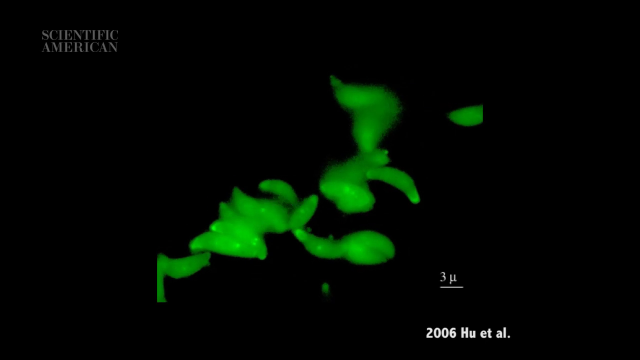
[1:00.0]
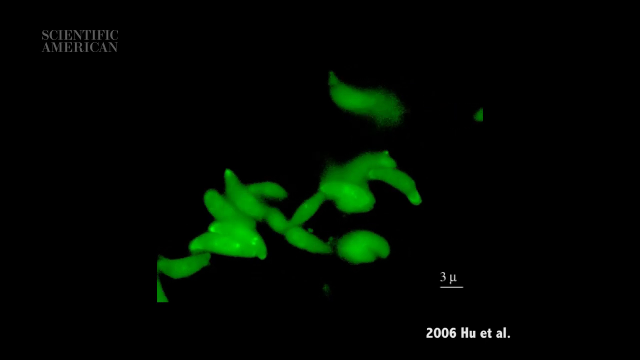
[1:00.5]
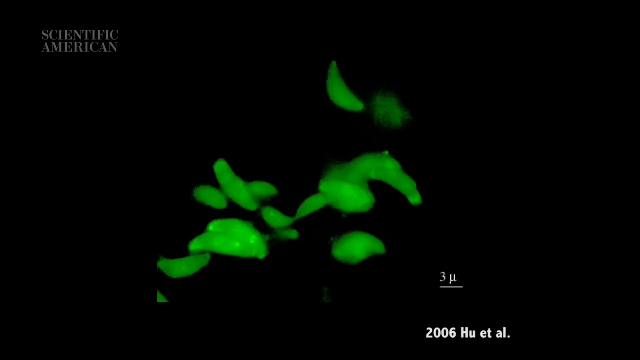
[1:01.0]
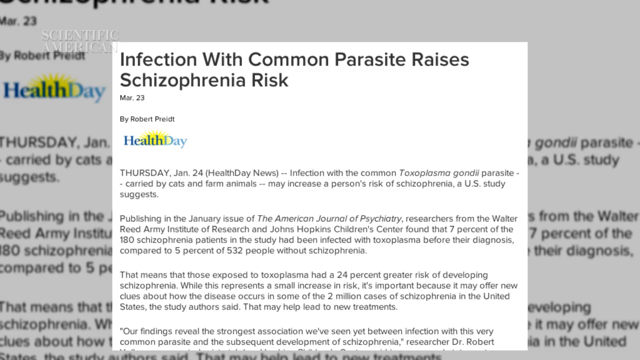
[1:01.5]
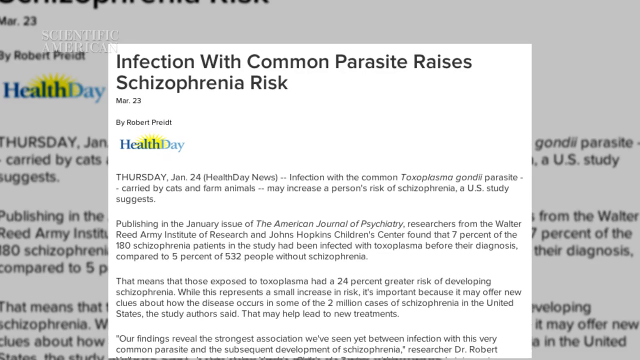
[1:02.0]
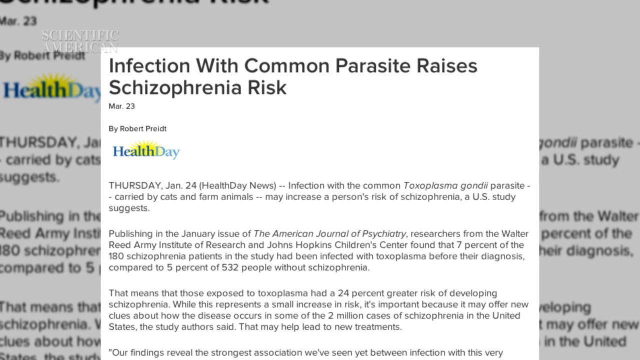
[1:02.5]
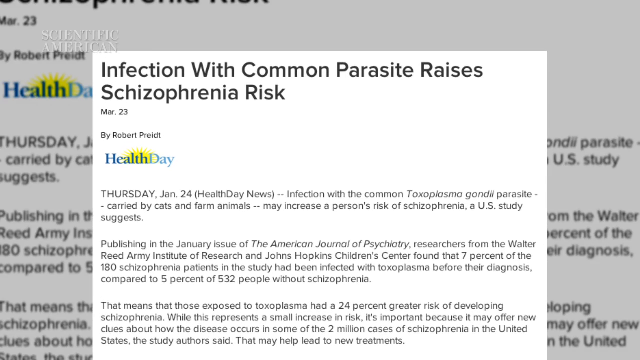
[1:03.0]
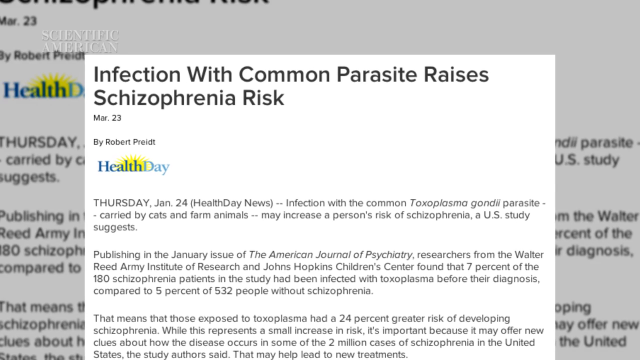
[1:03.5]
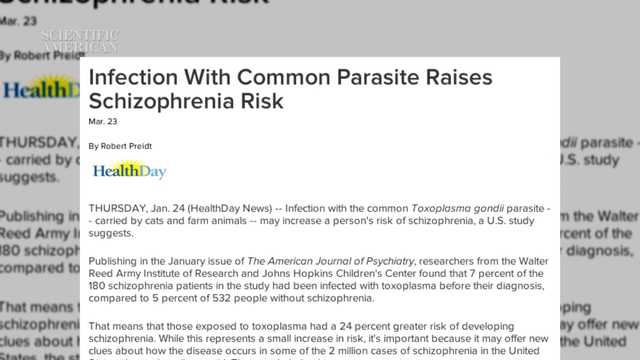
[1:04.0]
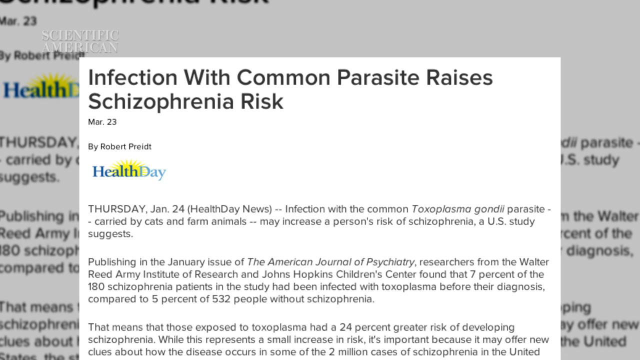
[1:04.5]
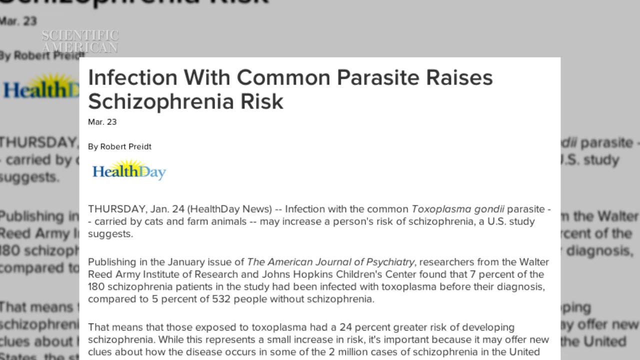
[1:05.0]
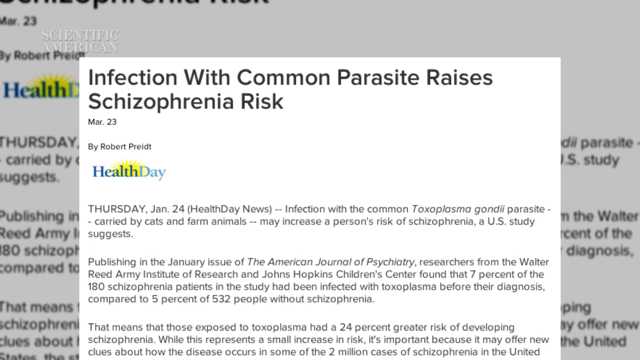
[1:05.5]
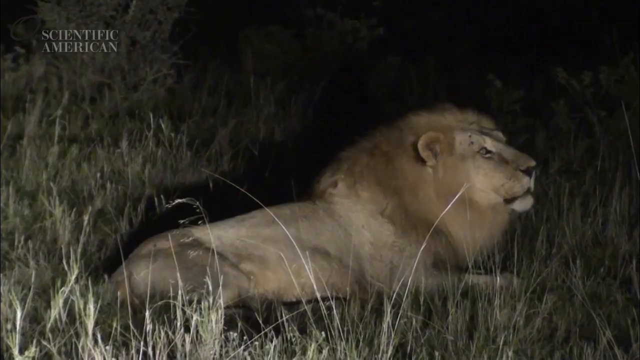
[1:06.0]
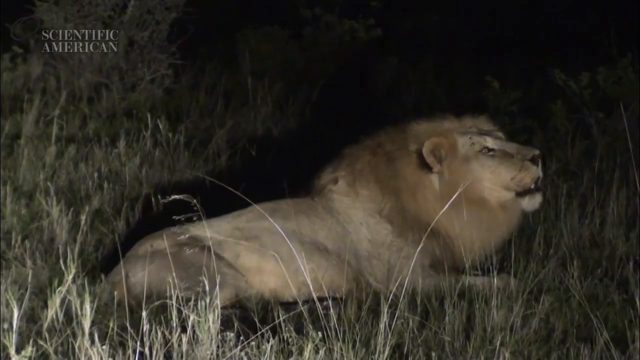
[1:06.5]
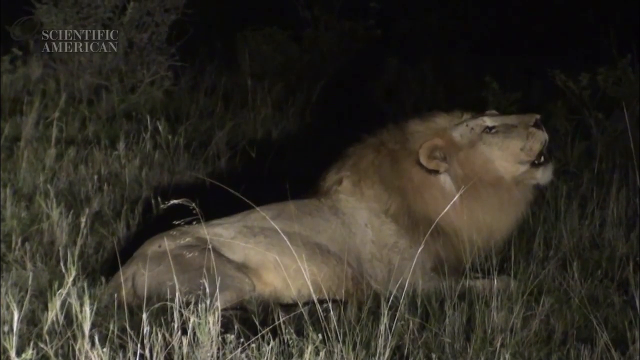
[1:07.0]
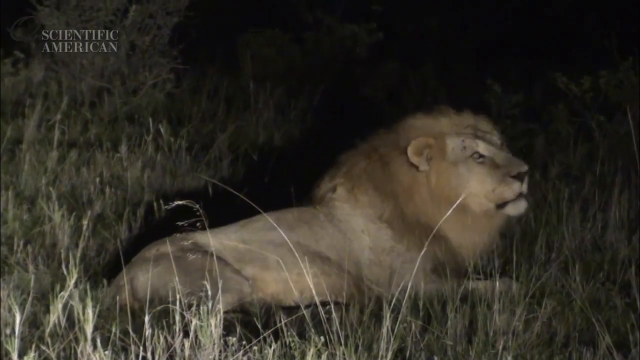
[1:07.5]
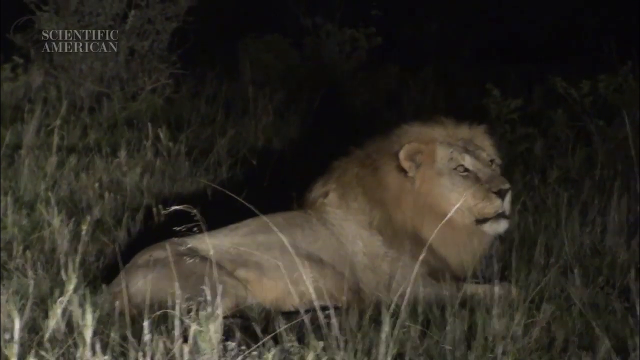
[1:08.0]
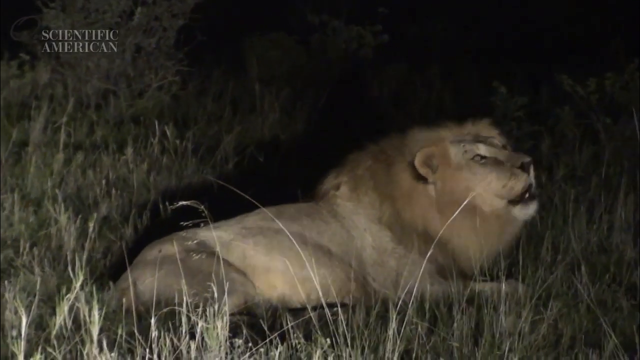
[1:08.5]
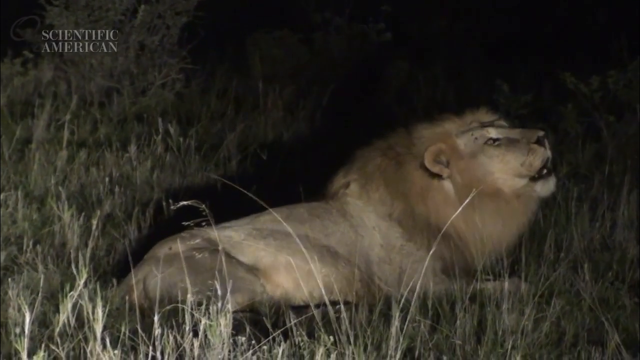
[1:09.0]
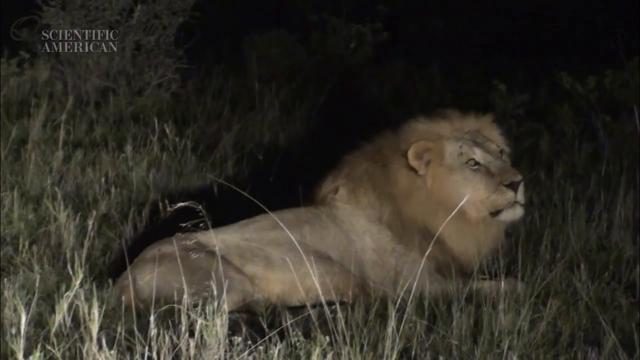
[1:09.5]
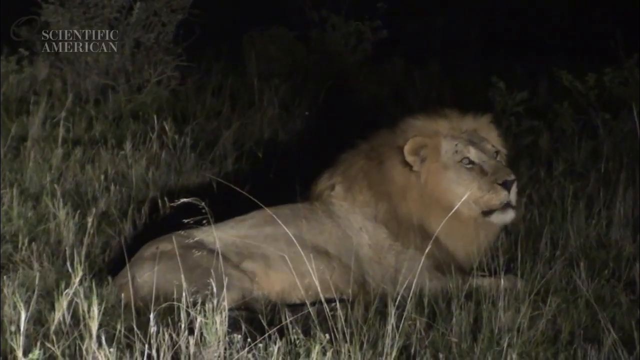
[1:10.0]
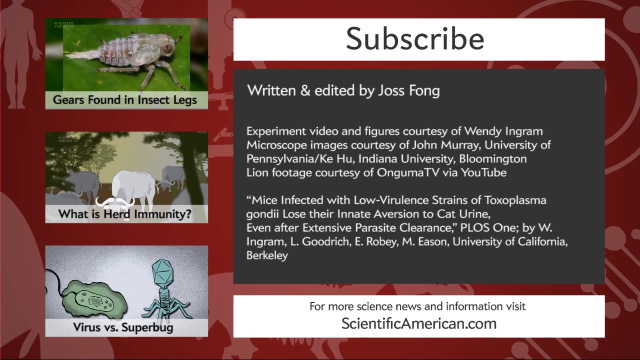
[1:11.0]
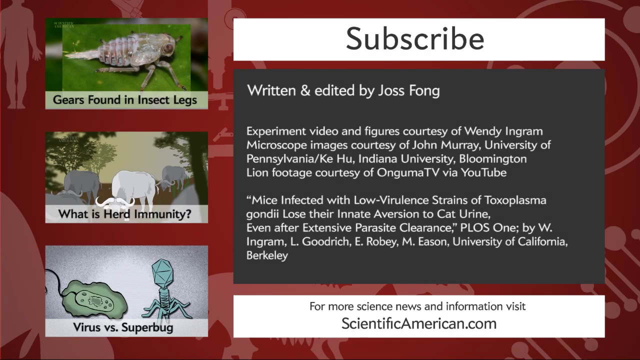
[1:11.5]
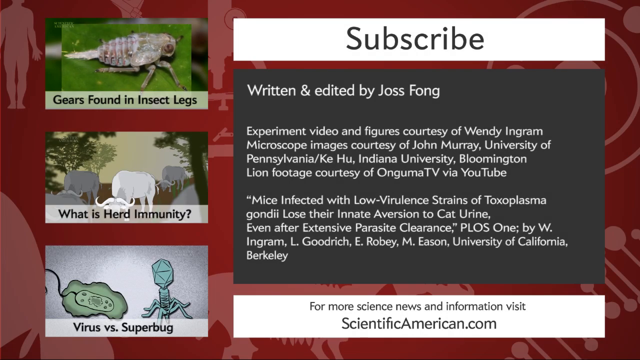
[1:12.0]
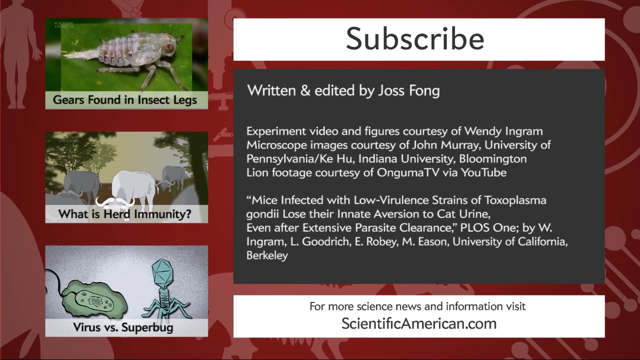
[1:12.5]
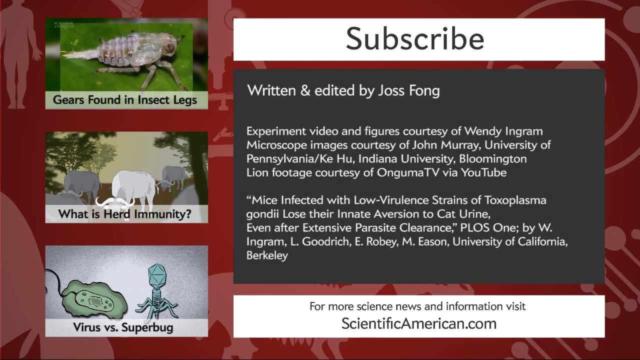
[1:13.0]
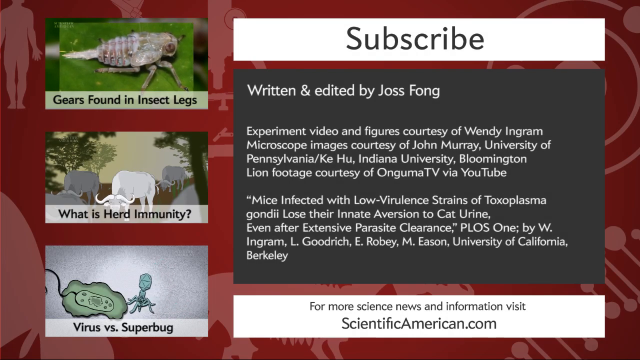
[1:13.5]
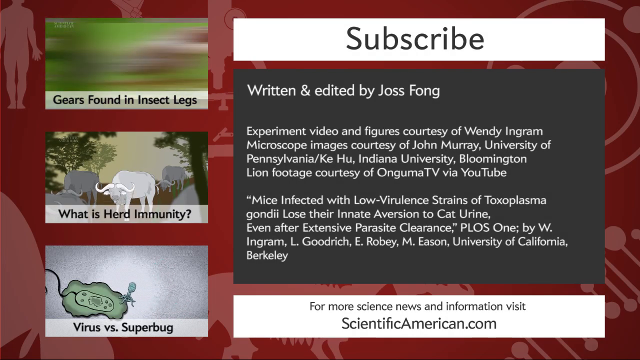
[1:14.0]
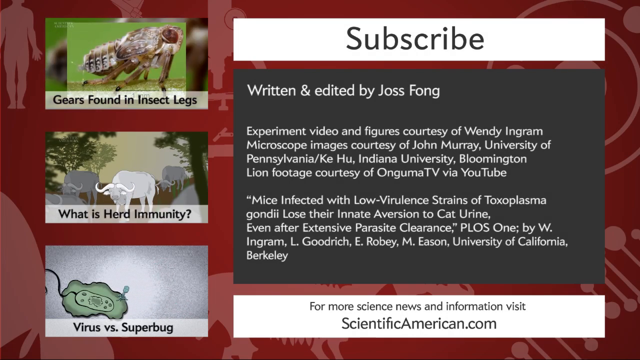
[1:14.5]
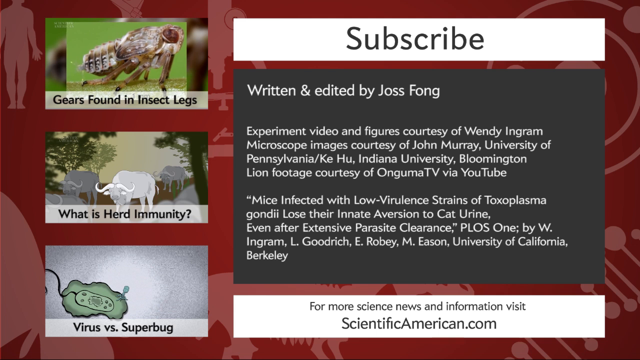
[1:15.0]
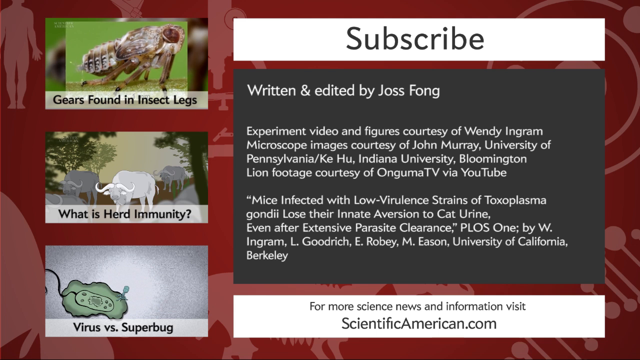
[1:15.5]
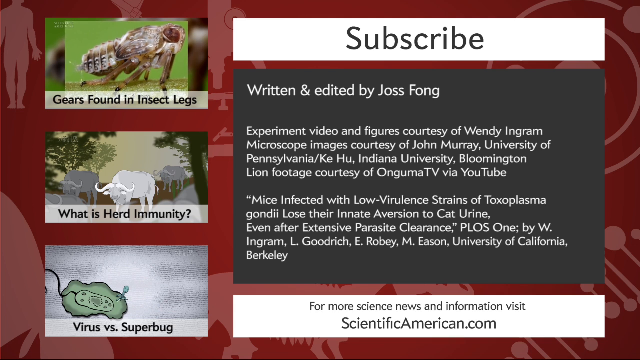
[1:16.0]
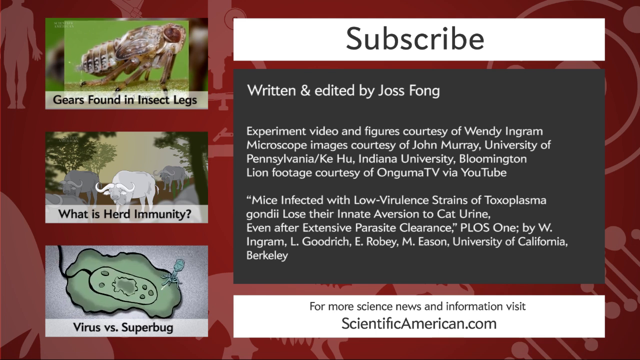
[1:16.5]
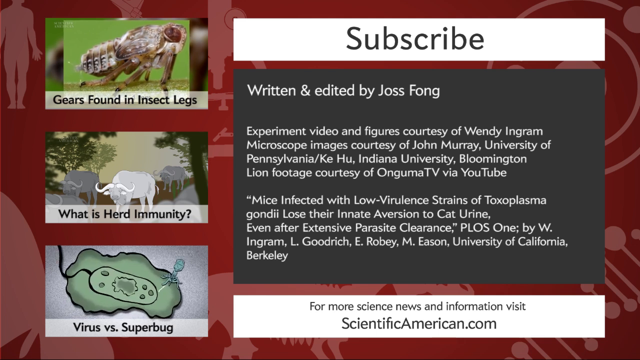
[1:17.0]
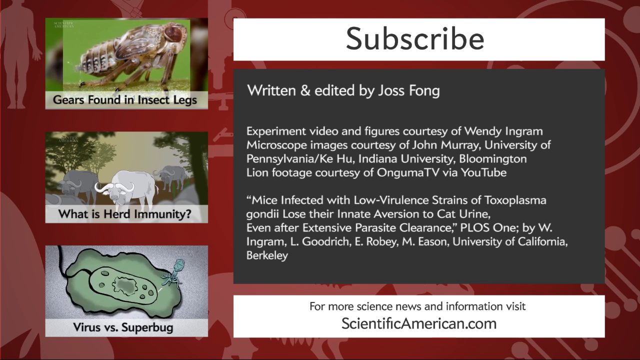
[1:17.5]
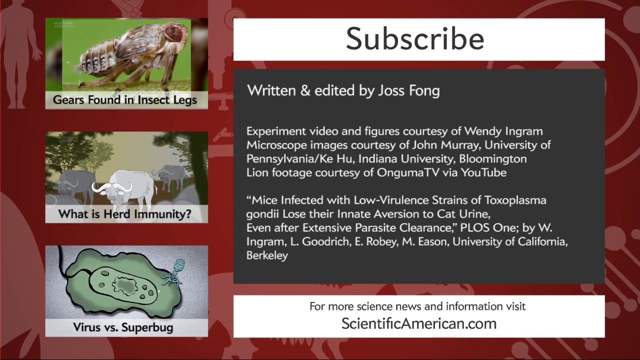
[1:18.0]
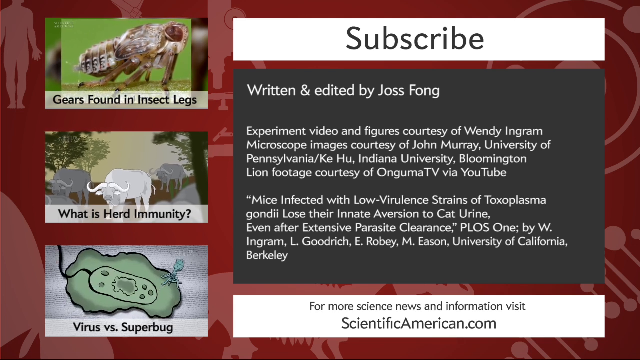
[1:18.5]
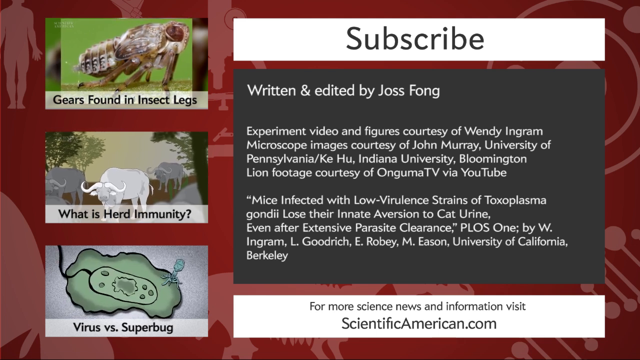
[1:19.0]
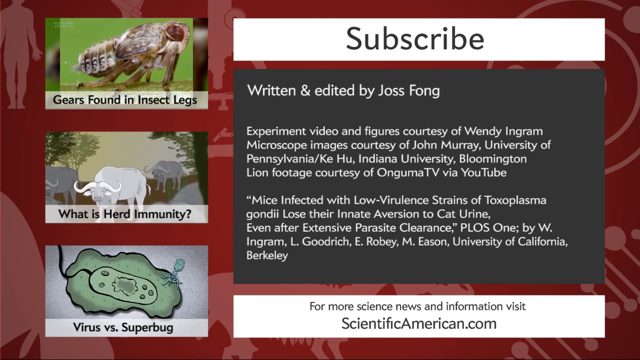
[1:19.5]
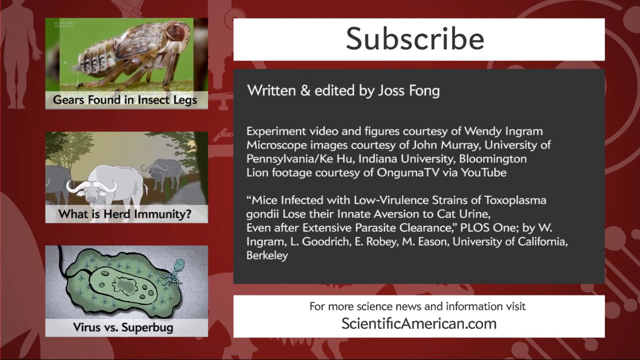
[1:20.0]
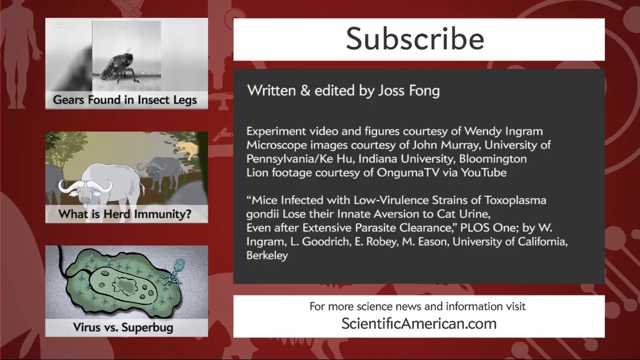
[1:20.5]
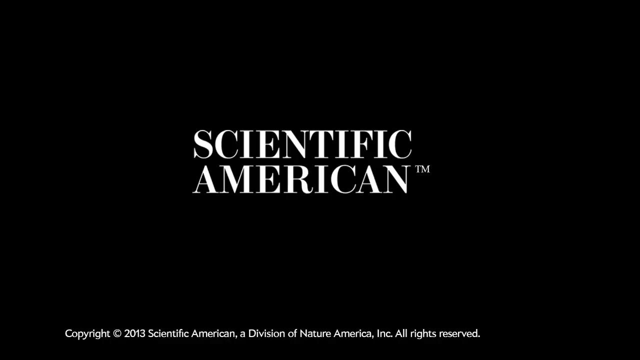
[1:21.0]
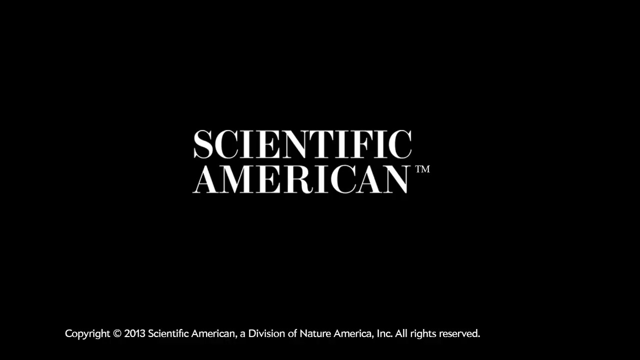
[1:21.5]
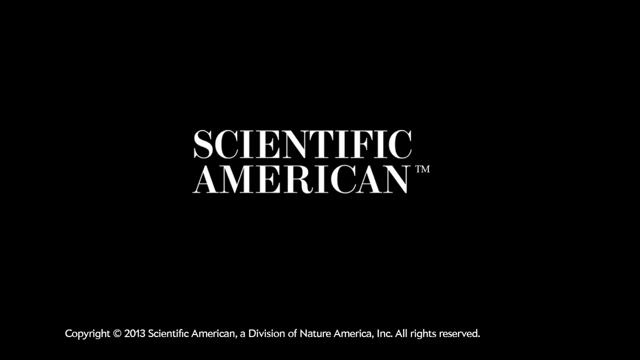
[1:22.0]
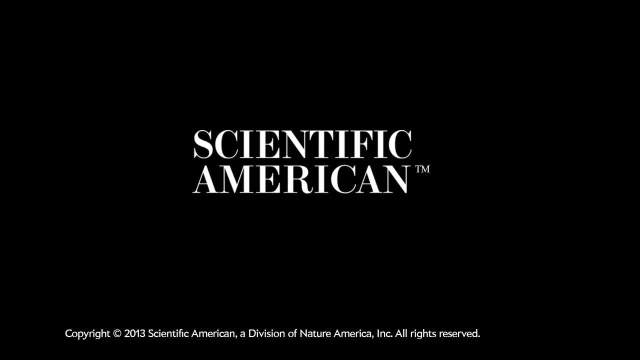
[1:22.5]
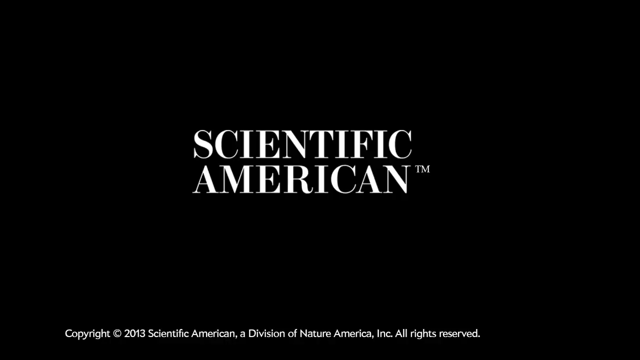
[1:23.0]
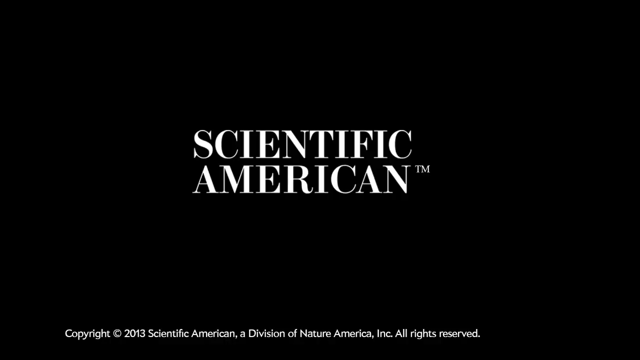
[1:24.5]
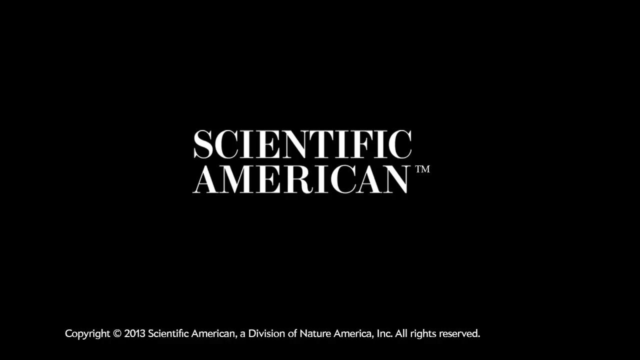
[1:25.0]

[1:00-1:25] A zoomed-in, magnified view shows what appear to be green cells moving. An article then appears with the title "Infection with common parasite raises schizophrenia risk", and the view zooms in on it before the article disappears. A video clip follows of a lion outside on a grass savanna at night, lying down on the grass and appearing to roar multiple times. That footage disappears and a slide appears with several stories down the left-hand side: "gears found in insect legs", "what is herd immunity" and "virus versus superbug". On the right-hand side there is a large white subscribe button and text reading "written and edited by Joss Fong", along with "experiment video and figures courtesy of" followed by a number of names, and a reference to scientificamerican.com for more information. The slide then disappears.